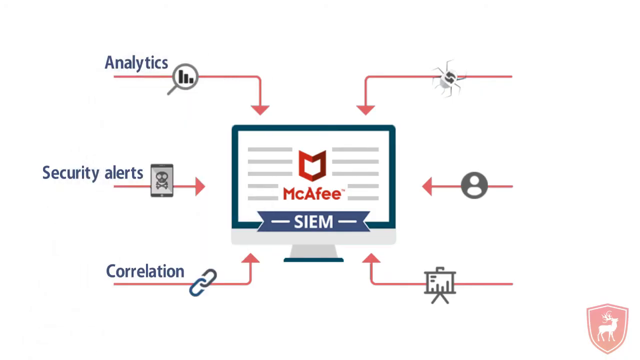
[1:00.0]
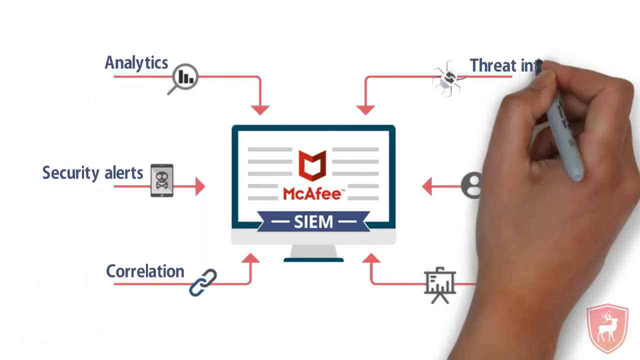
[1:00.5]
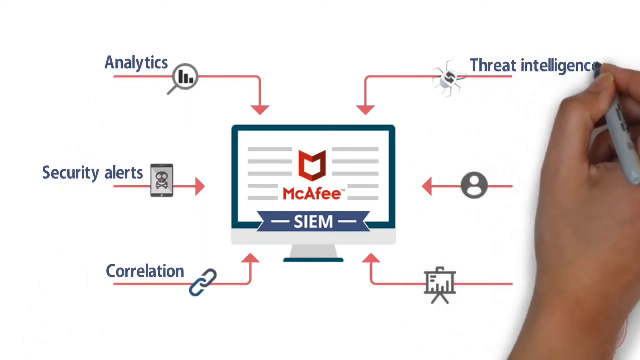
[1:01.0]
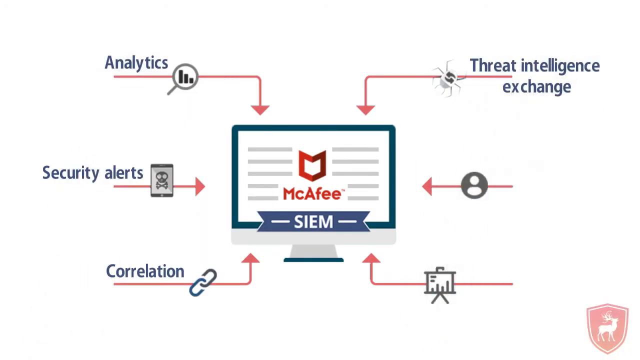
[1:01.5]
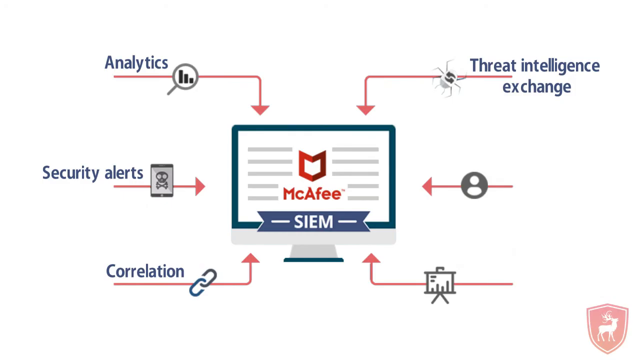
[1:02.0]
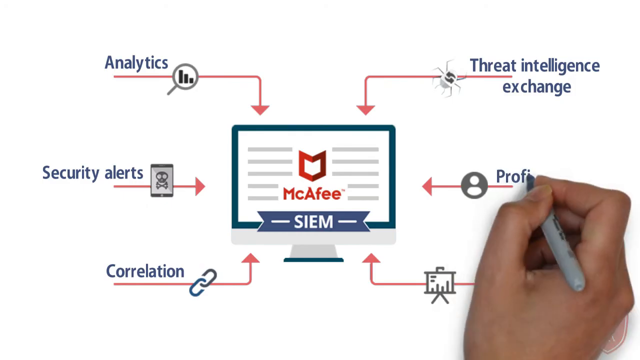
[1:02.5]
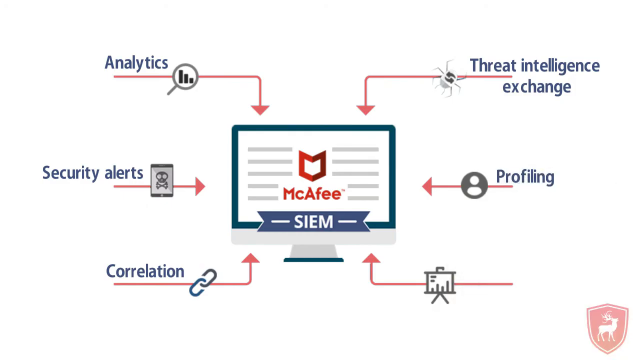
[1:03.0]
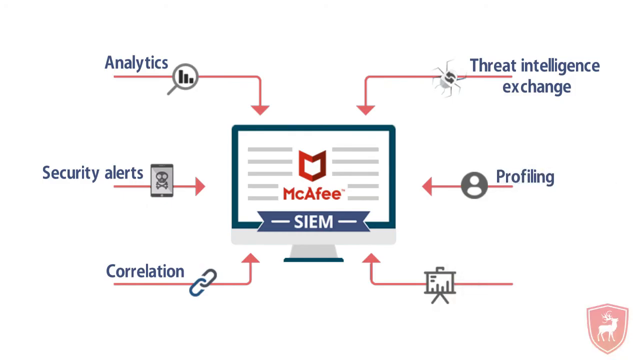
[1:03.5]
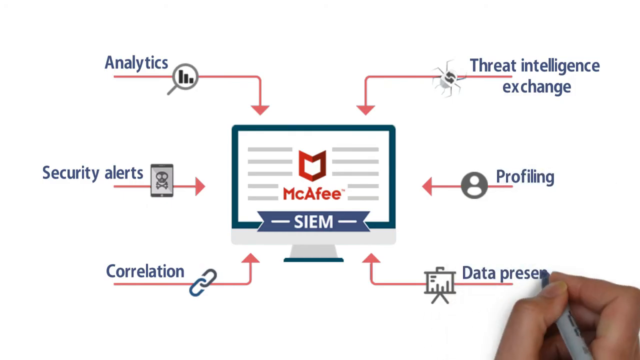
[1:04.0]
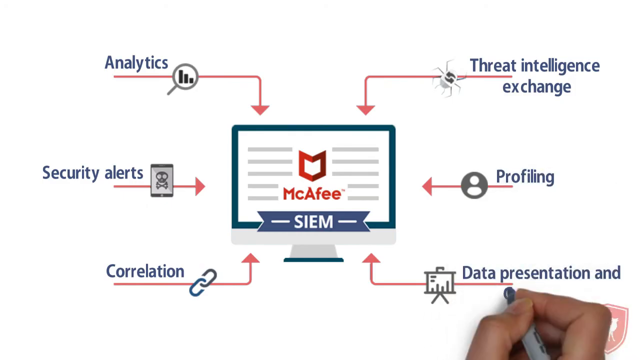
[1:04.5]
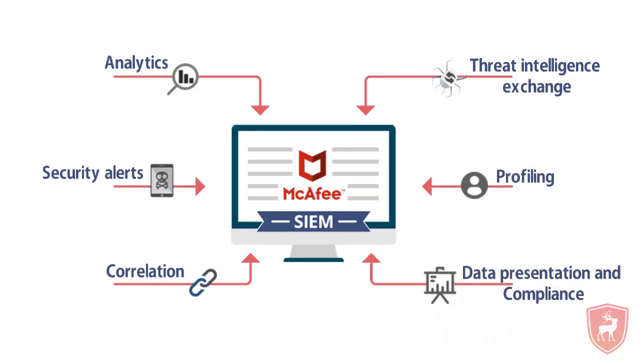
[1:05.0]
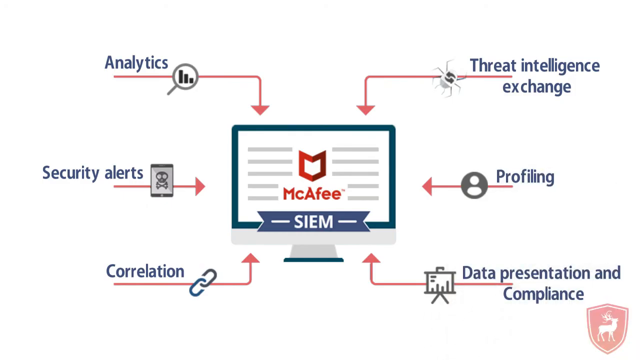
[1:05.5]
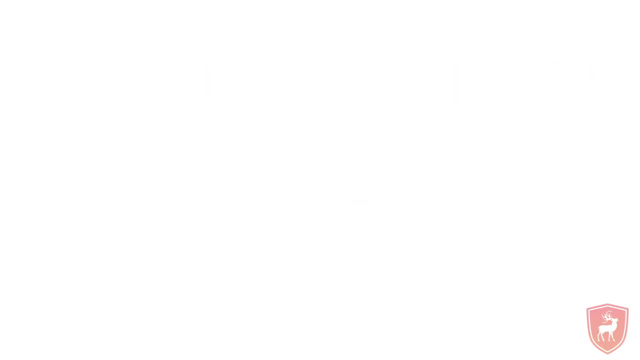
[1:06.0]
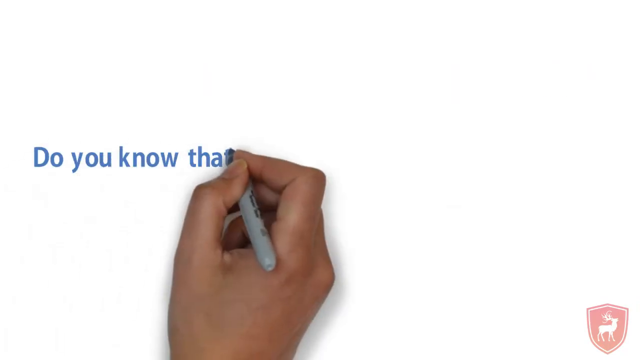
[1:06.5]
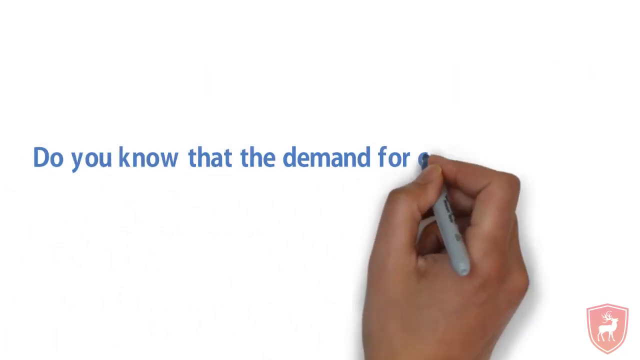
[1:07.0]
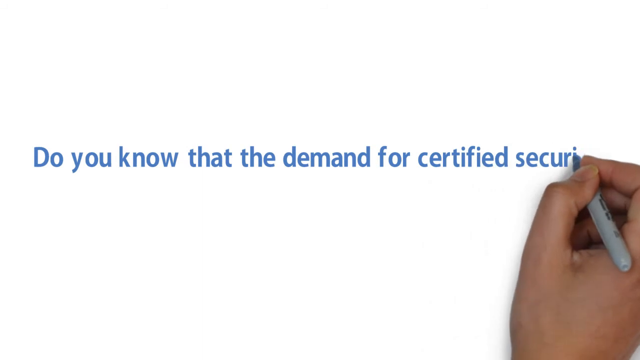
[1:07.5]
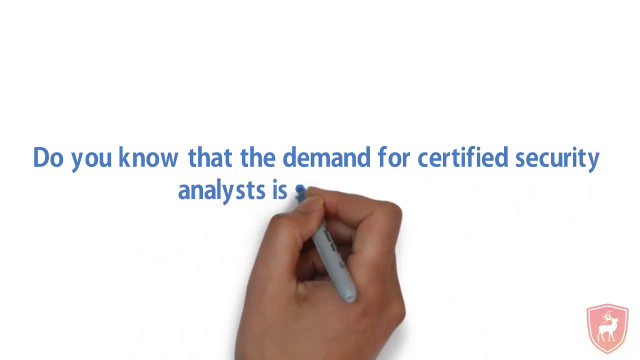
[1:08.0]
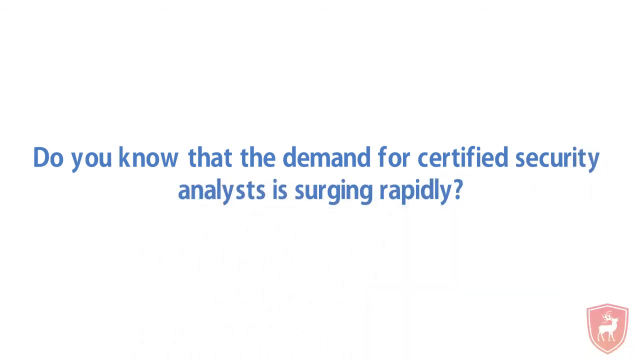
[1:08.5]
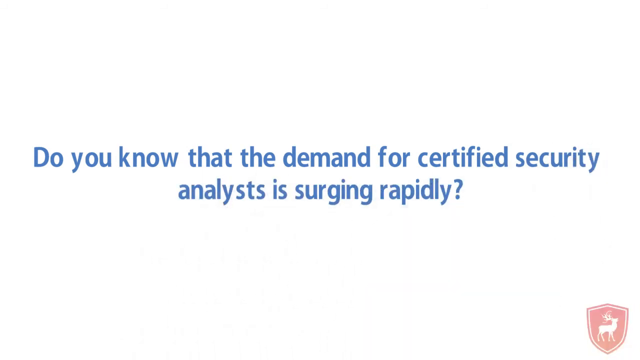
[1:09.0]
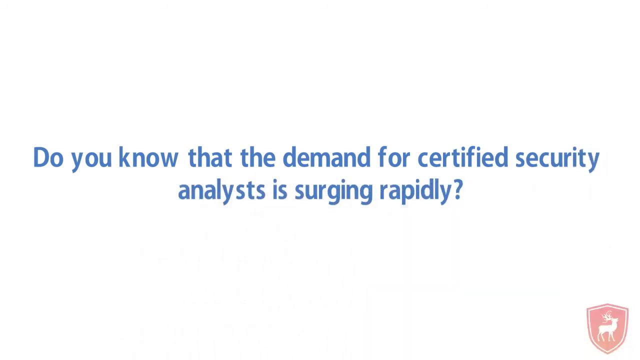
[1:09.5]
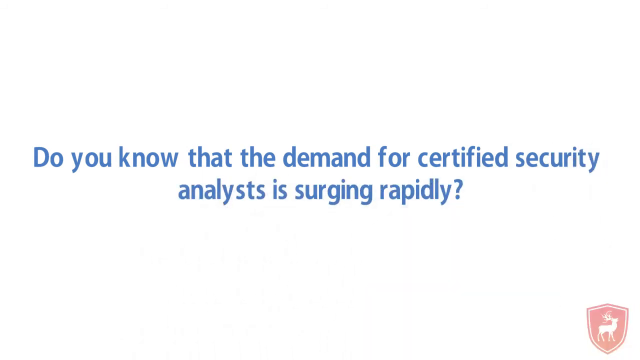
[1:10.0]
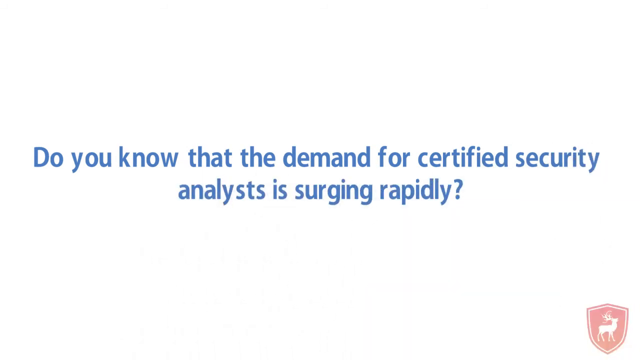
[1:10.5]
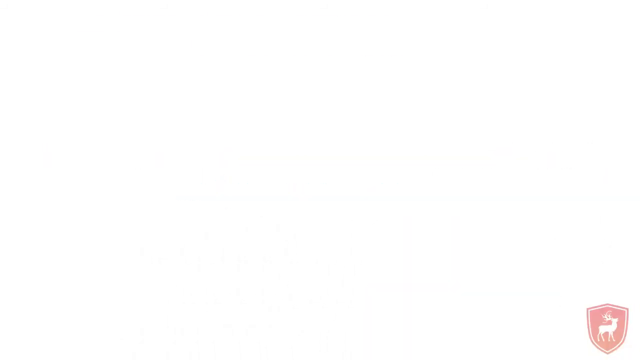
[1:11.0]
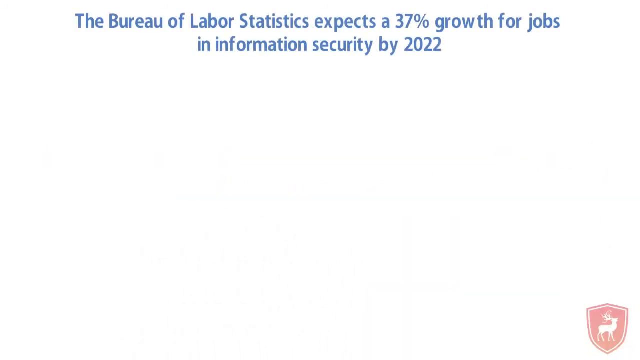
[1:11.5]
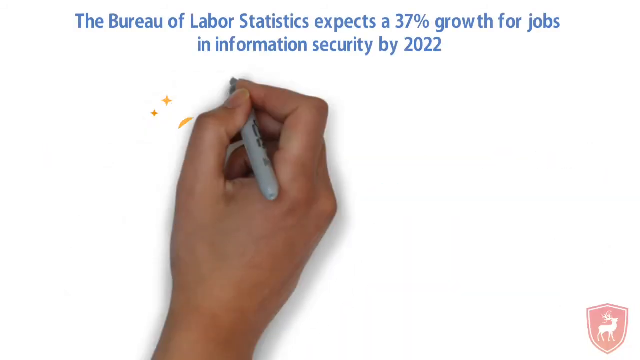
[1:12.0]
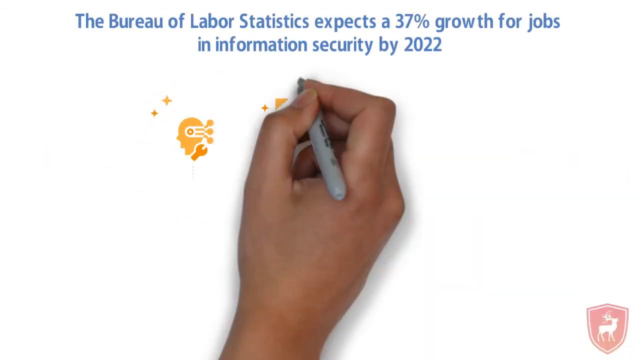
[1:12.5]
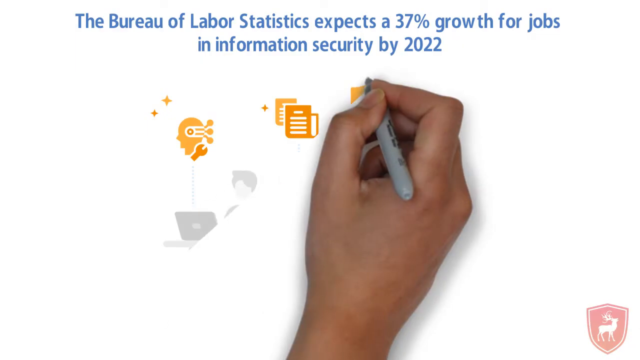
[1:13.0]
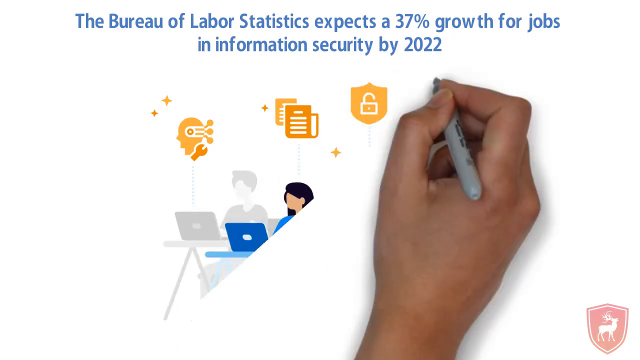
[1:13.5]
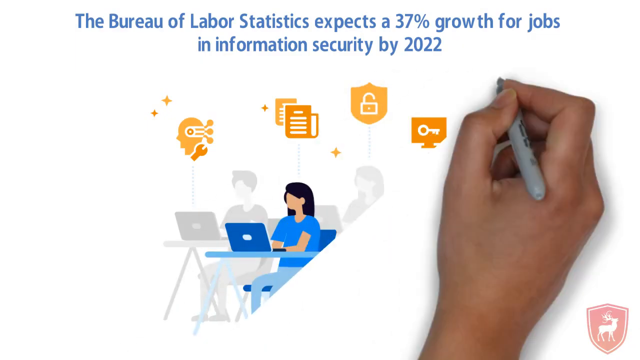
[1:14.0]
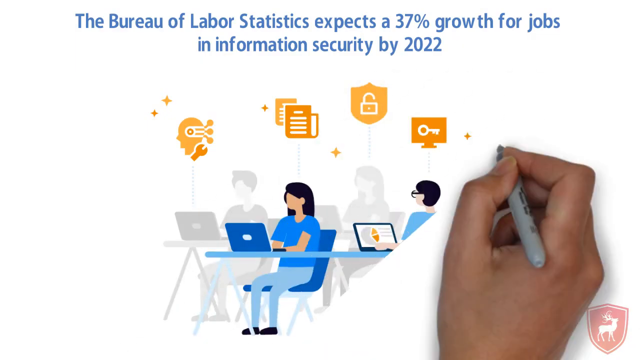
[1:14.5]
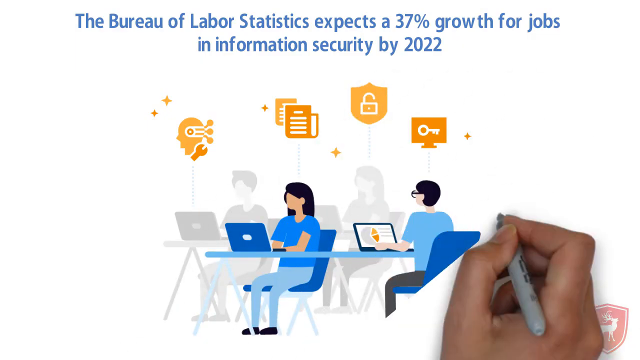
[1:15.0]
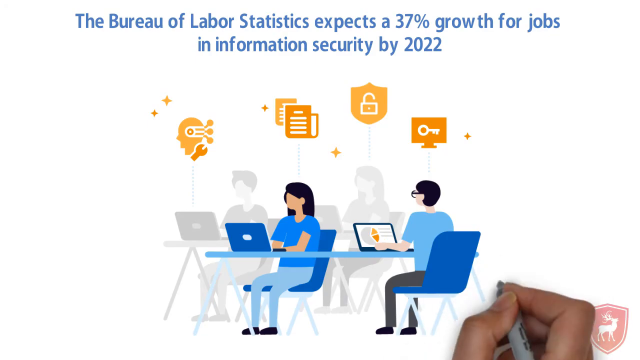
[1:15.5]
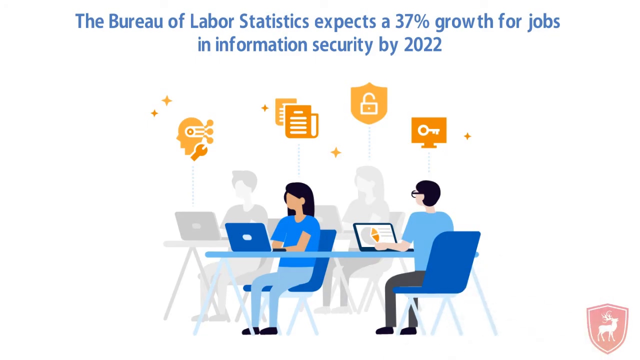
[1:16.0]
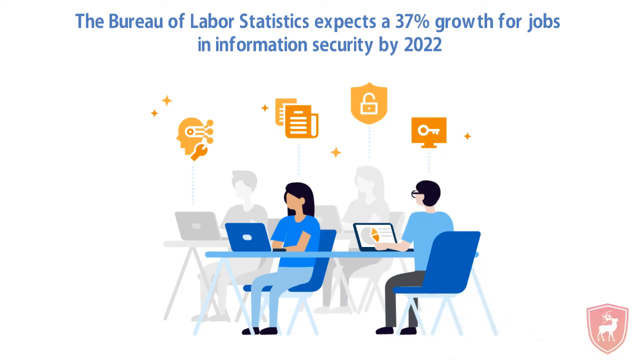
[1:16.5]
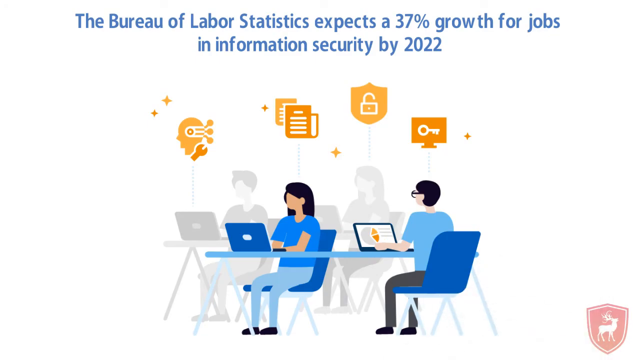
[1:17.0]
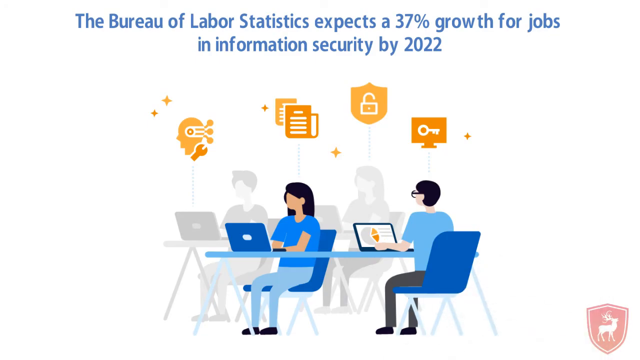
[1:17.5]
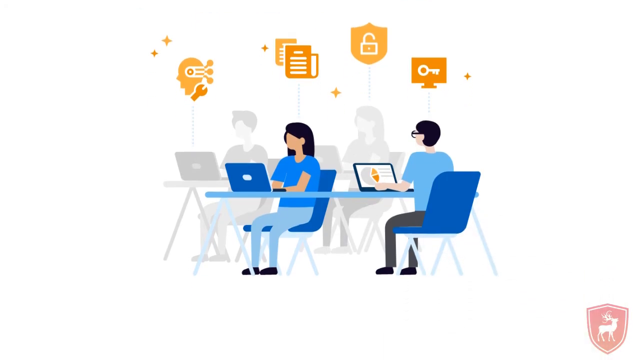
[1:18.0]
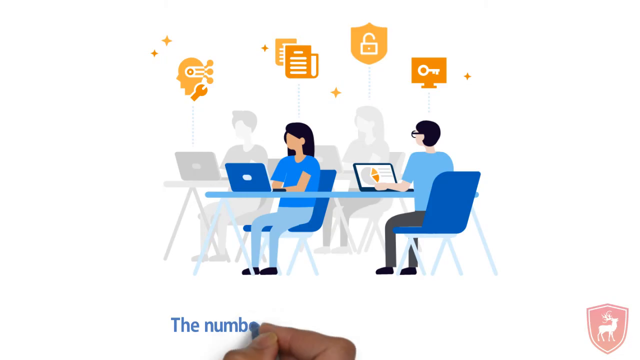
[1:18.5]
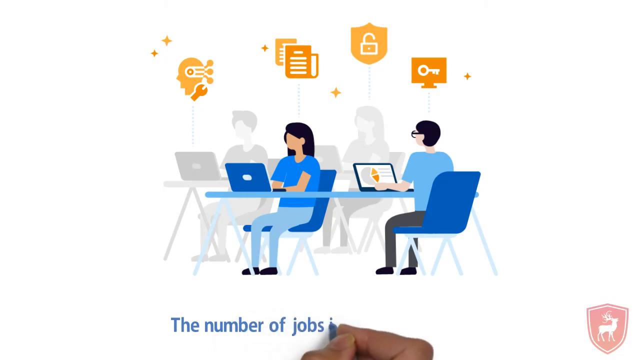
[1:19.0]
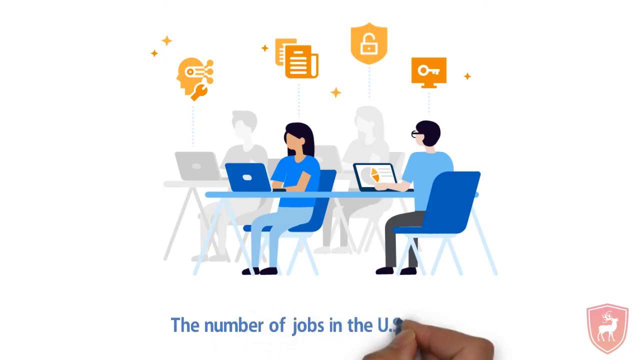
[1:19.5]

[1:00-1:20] The list reads correlation, security alerts, analytics, threat intelligence analysis, profiling, and data presentation and compliance. The video then states that demand for certified security is at an all-time high and that 37% growth in information security jobs will happen in the US.